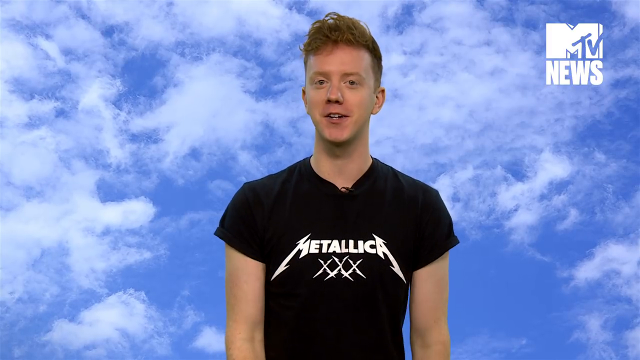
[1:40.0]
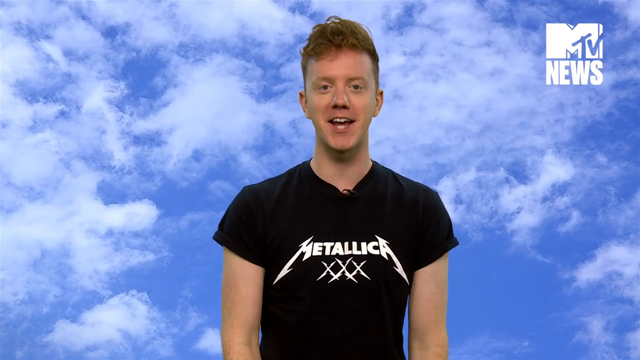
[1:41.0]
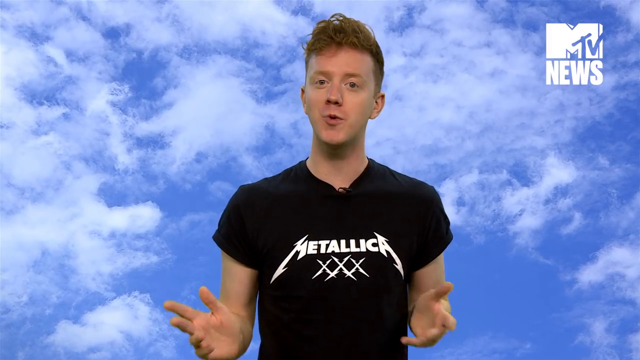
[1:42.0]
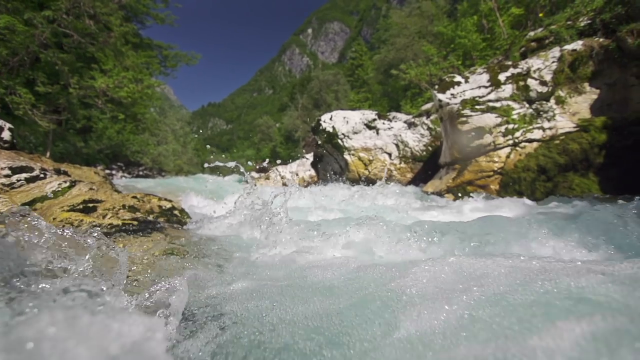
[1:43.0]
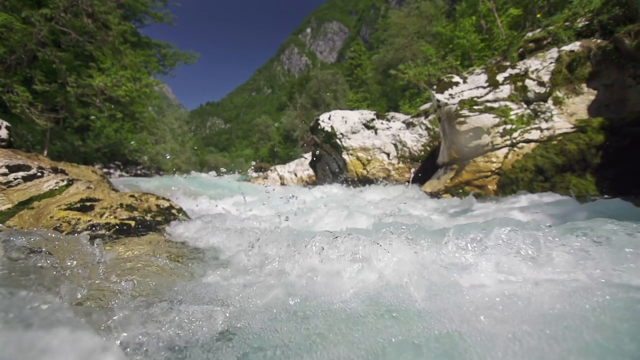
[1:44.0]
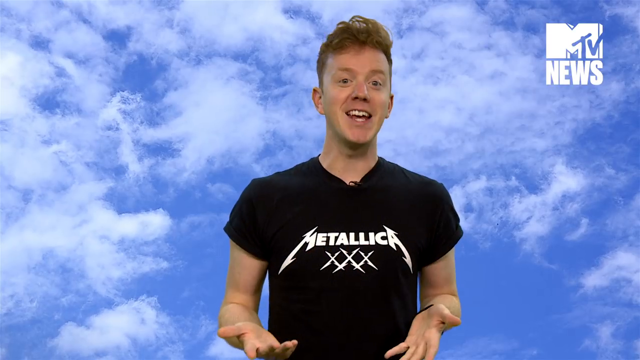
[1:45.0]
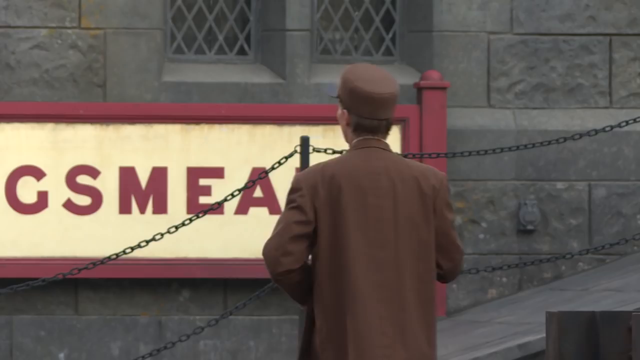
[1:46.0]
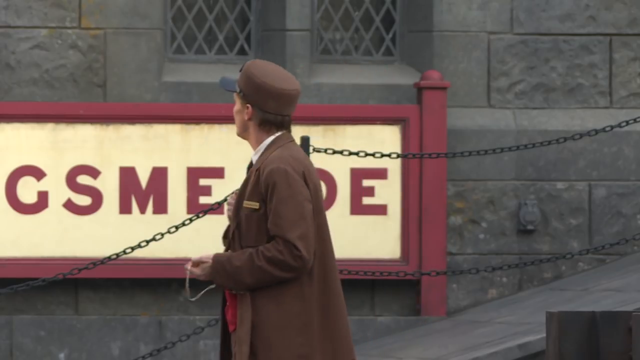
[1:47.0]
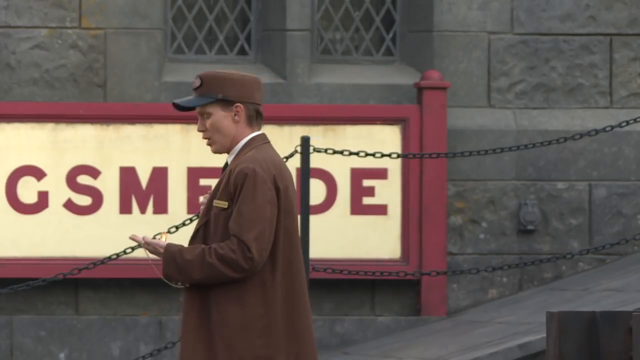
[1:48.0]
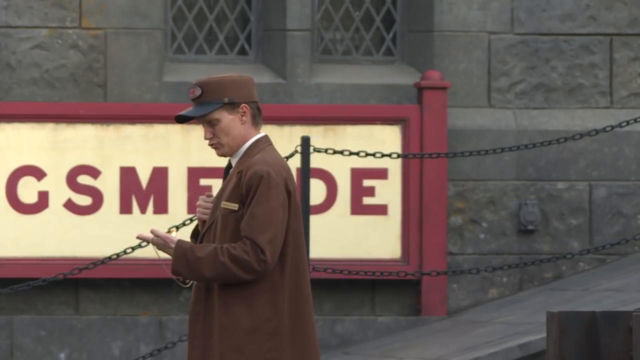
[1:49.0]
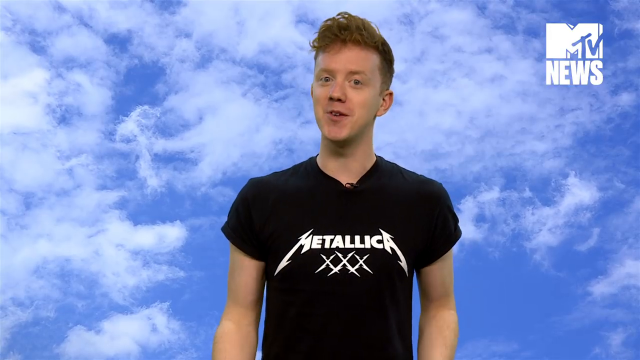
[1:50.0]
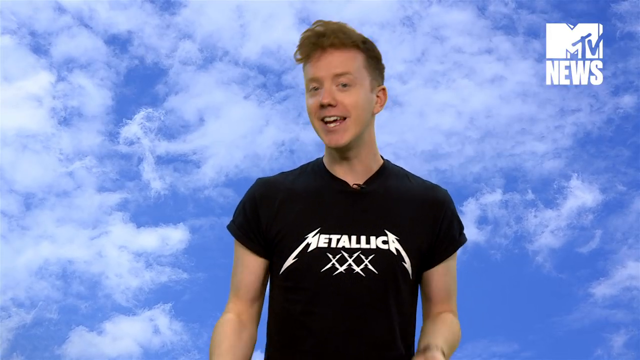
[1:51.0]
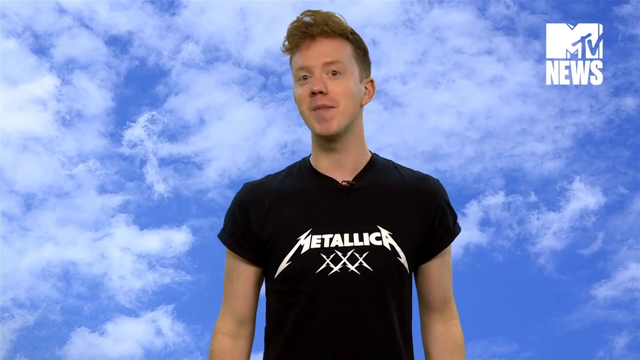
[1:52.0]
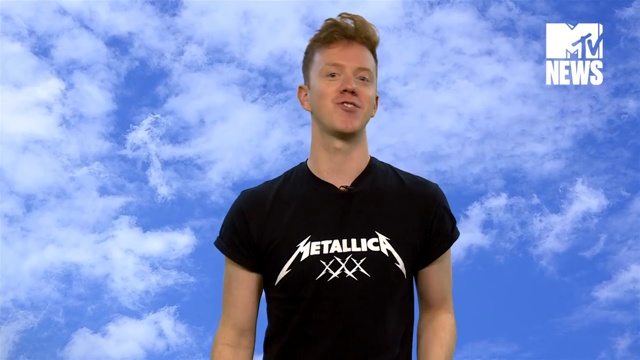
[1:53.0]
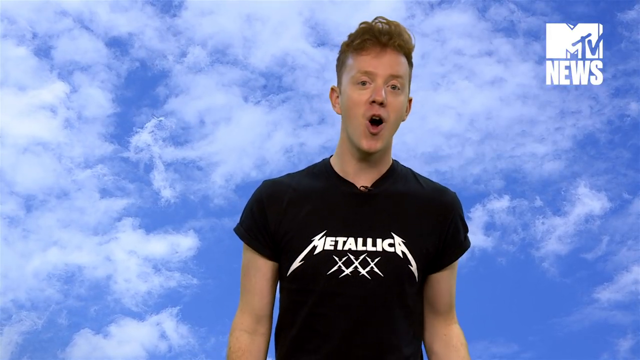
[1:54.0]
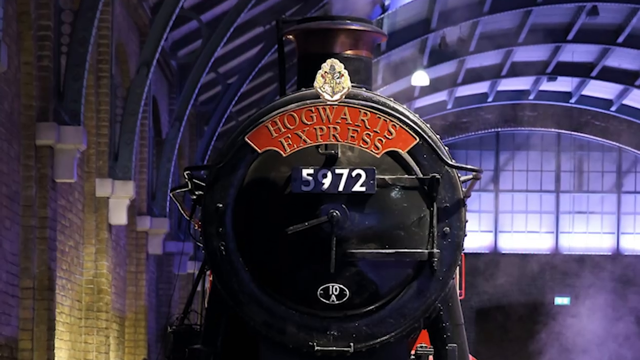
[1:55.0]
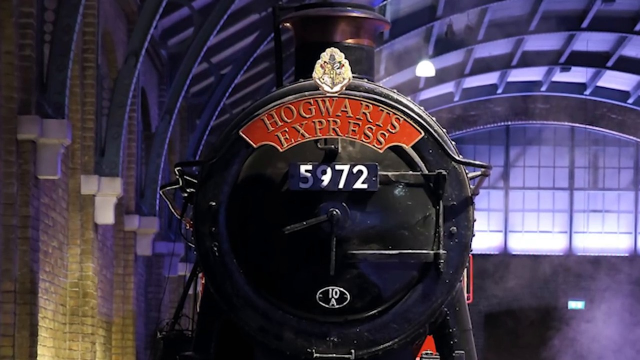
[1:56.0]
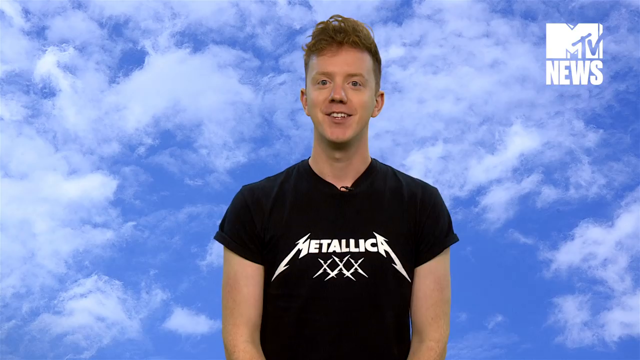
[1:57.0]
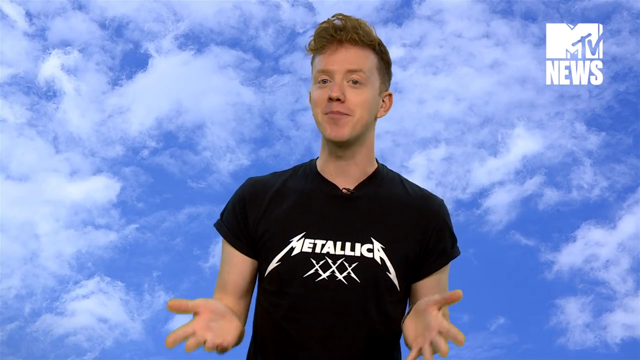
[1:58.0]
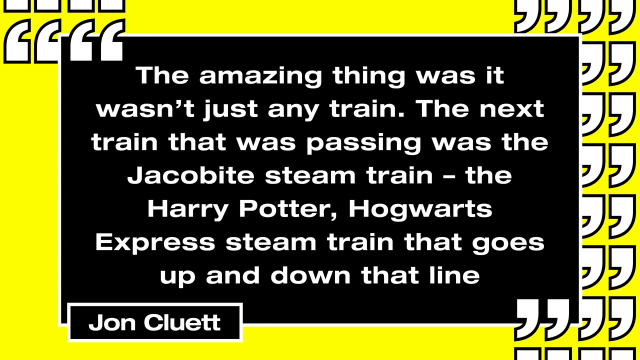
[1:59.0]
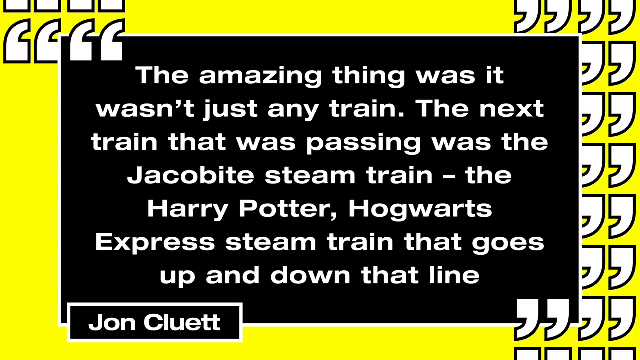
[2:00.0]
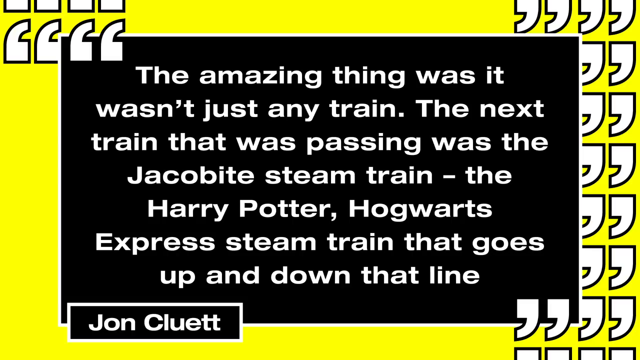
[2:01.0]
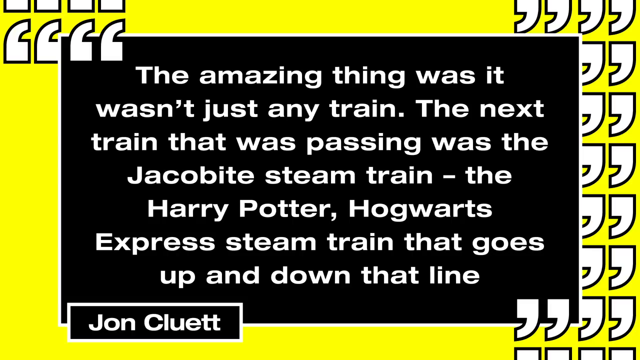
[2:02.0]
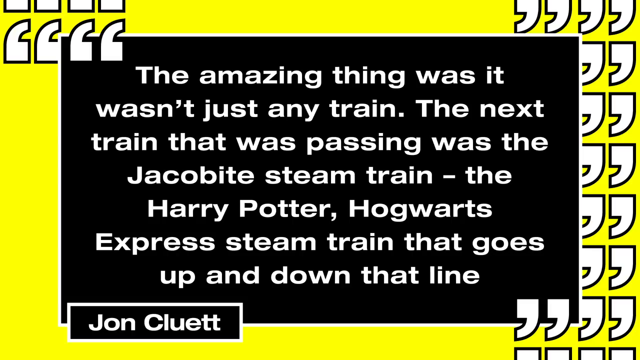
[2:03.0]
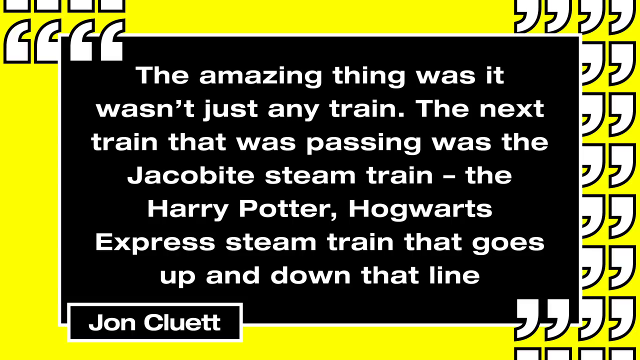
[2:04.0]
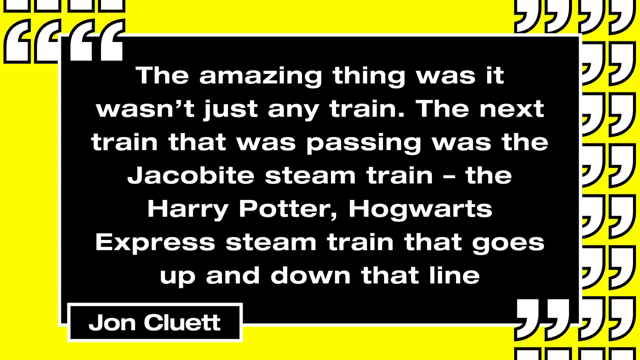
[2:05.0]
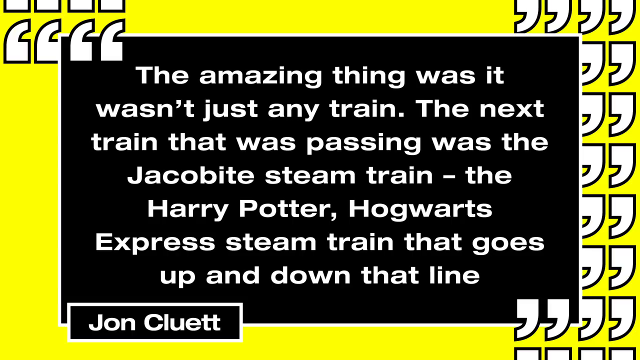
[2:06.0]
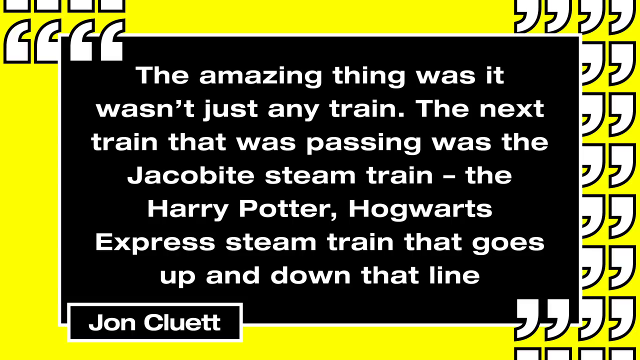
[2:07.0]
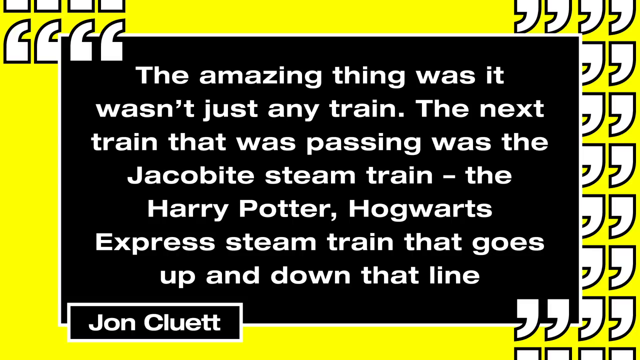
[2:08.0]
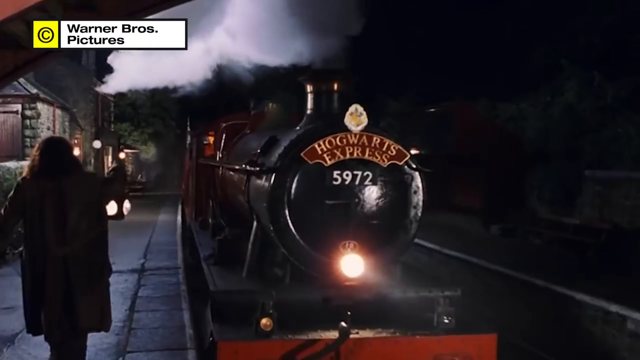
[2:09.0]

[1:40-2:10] The man in the black shirt with white Metallica text, with short reddish-brown hair, Caucasian and 20 to 25, stands against a kind of blue, cloudy sky background, talking. The video cuts to a river with greenery in the background, a hill, rocks on the sides of the river, and rapids rushing in white water. It returns to the man in front of the sky, then shows a person in a brown, kind of train conductor outfit with a kind of yellow sign with red text behind him. Back to the man in the Metallica shirt with three X's, the video then shows a front view of the Hogwarts Express train from Harry Potter, black with a kind of red background and gold text. After the man appears again against the sky, a screen with a yellow background contains a black box with white text beginning "it was an amazing thing, it wasn't just any train" and referring to the Harry Potter Hogwarts Express train that goes up and down that line. The video then shows the Hogwarts Express from the Harry Potter movie with Hagrid right next to the train.